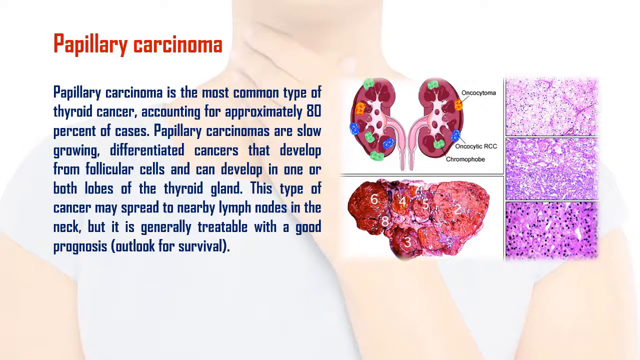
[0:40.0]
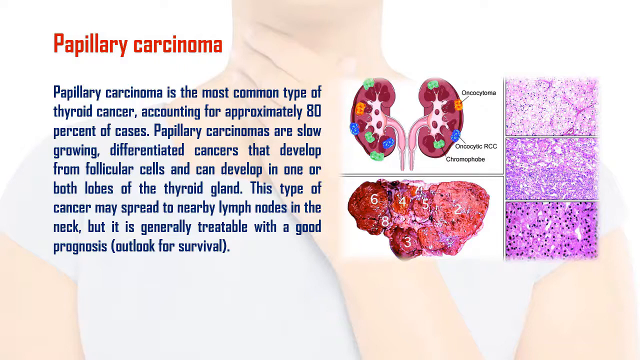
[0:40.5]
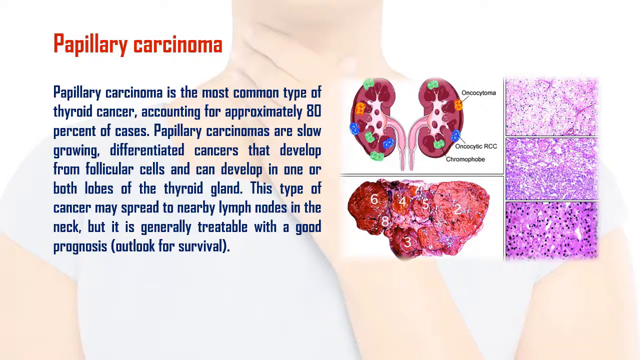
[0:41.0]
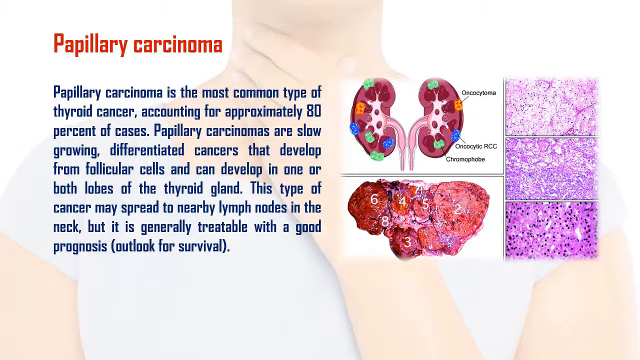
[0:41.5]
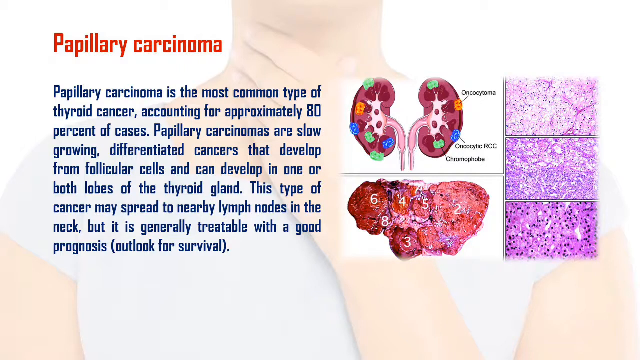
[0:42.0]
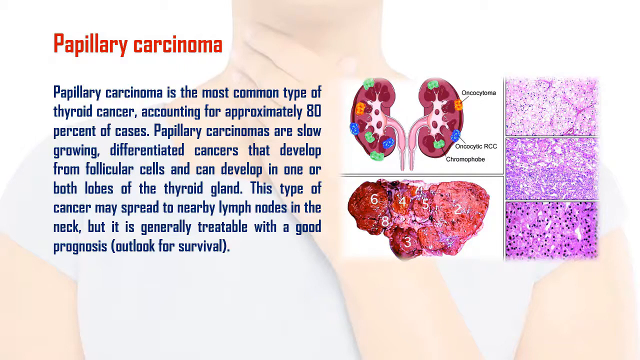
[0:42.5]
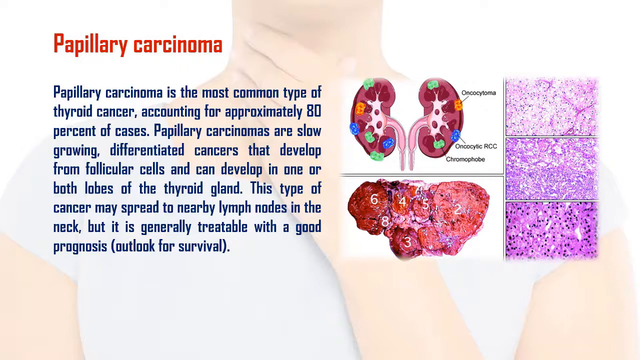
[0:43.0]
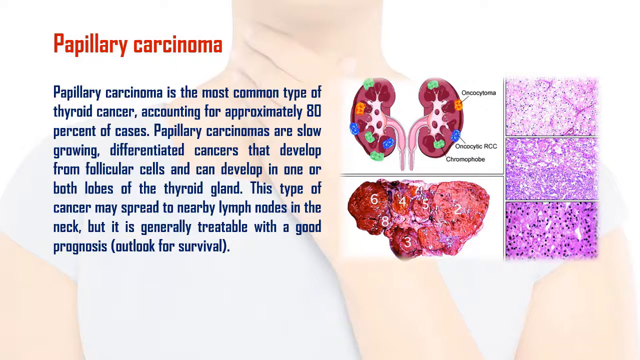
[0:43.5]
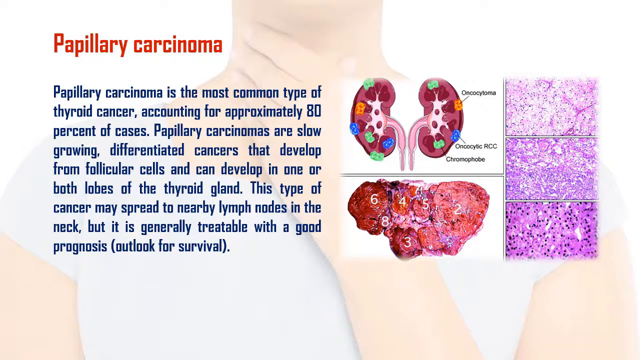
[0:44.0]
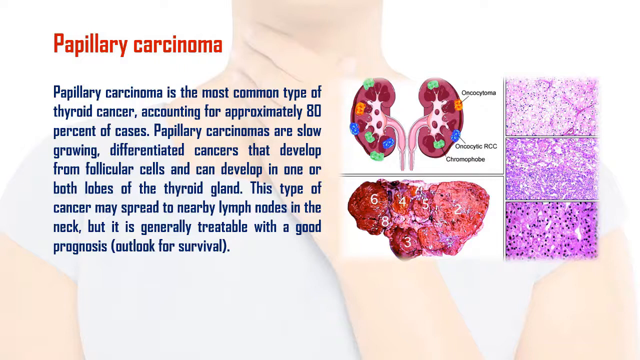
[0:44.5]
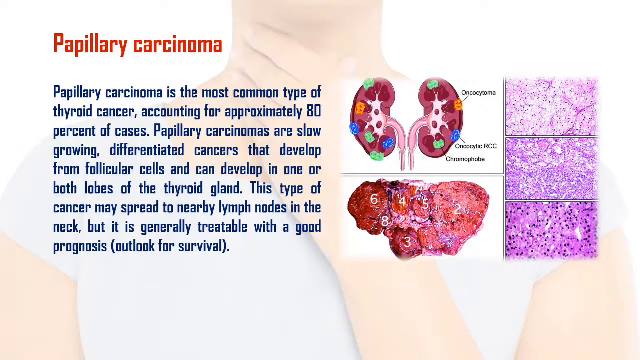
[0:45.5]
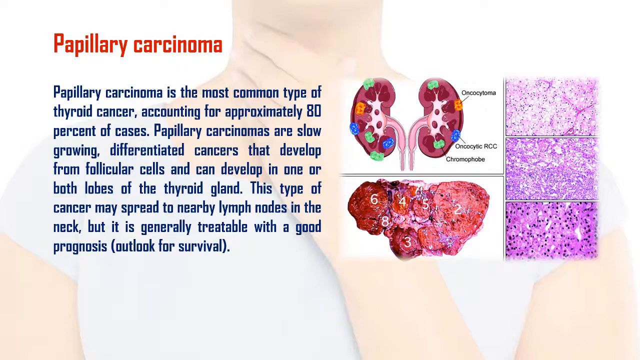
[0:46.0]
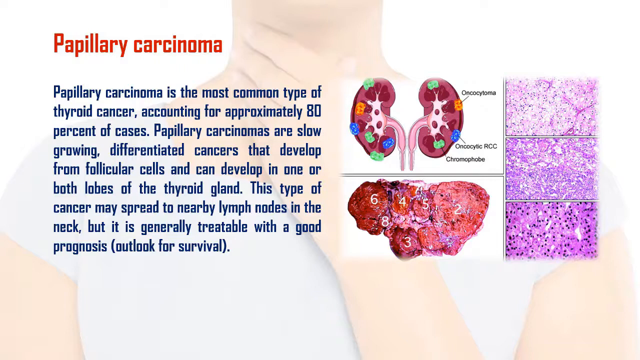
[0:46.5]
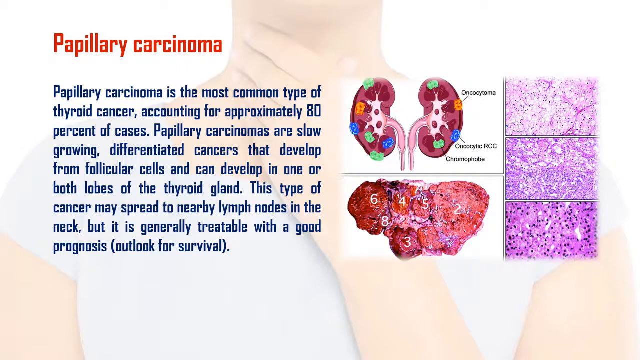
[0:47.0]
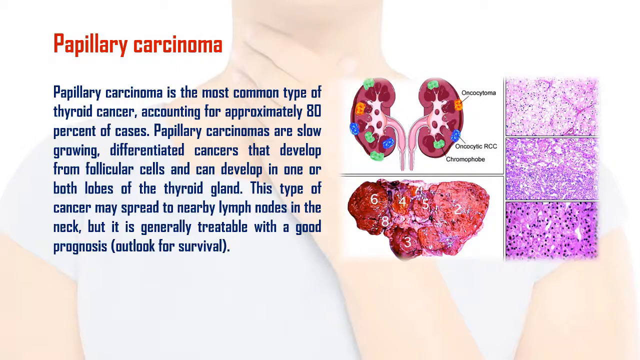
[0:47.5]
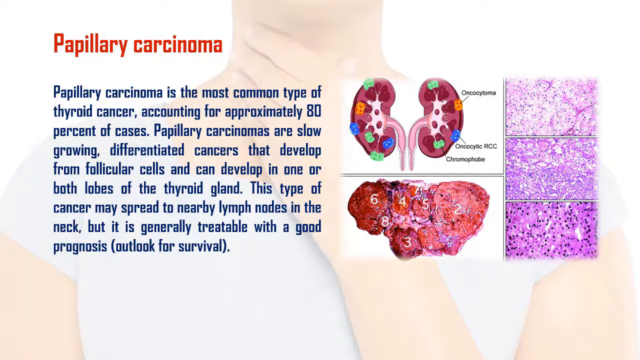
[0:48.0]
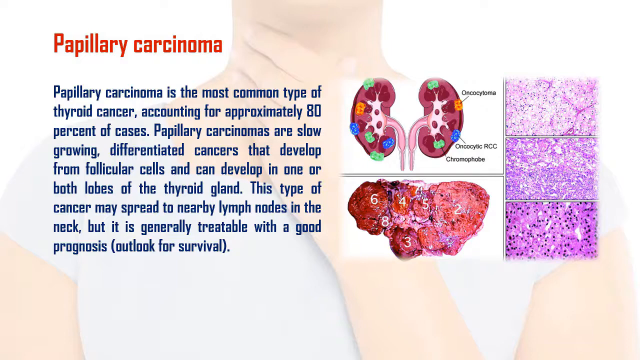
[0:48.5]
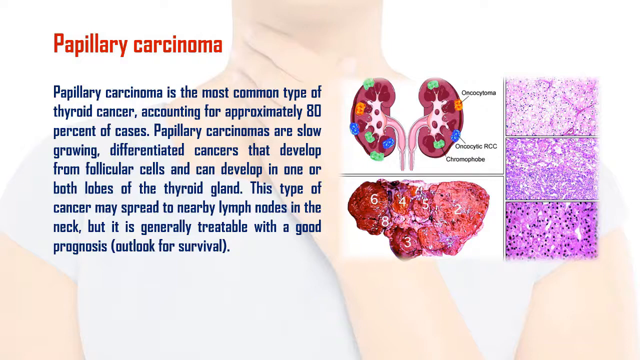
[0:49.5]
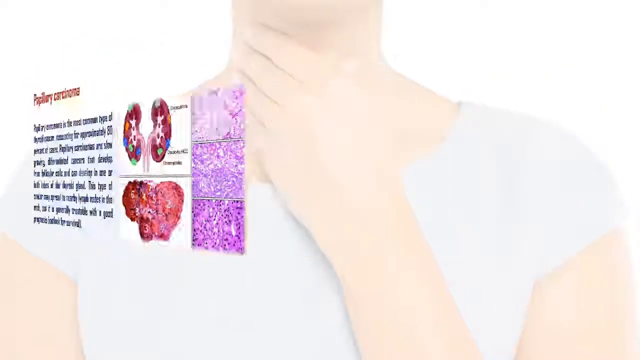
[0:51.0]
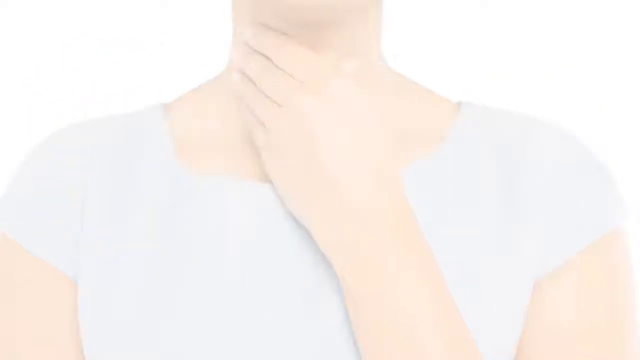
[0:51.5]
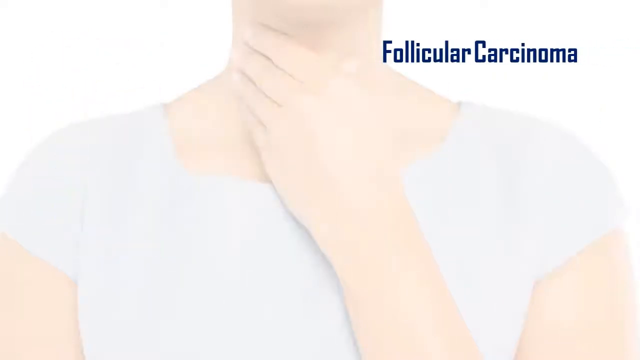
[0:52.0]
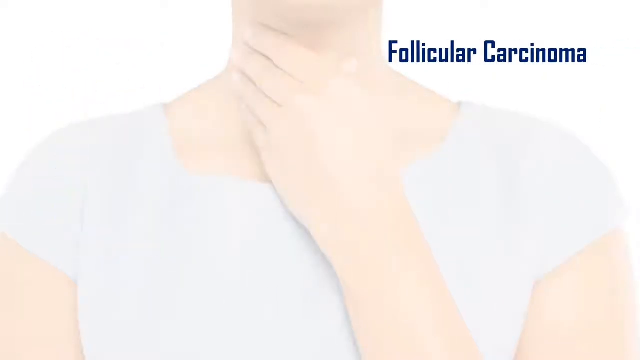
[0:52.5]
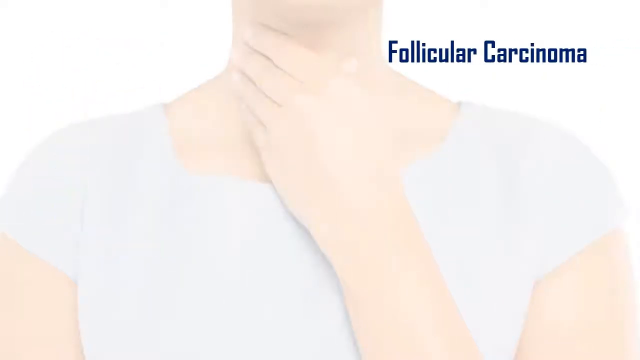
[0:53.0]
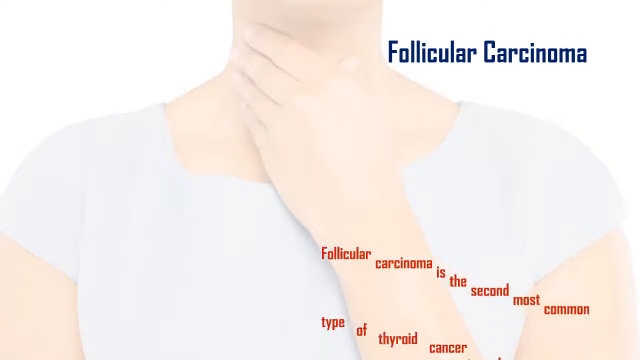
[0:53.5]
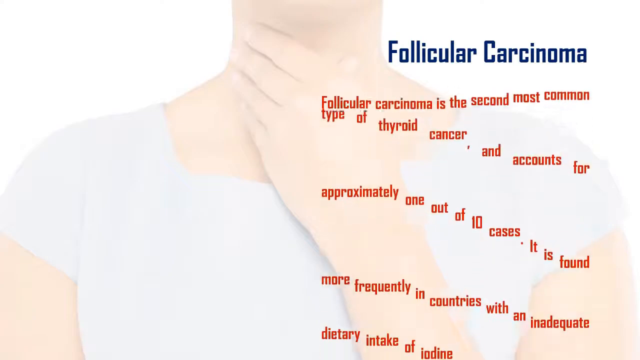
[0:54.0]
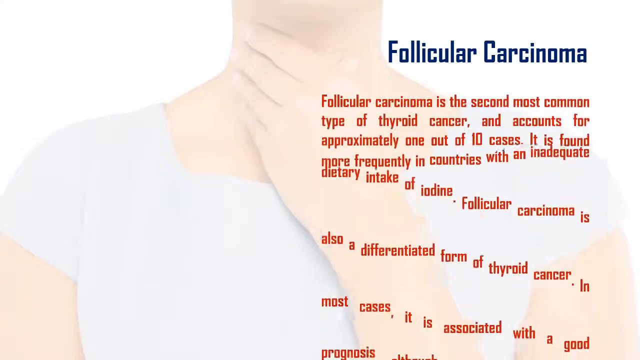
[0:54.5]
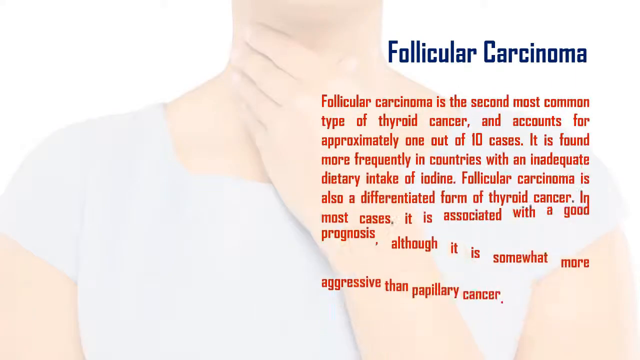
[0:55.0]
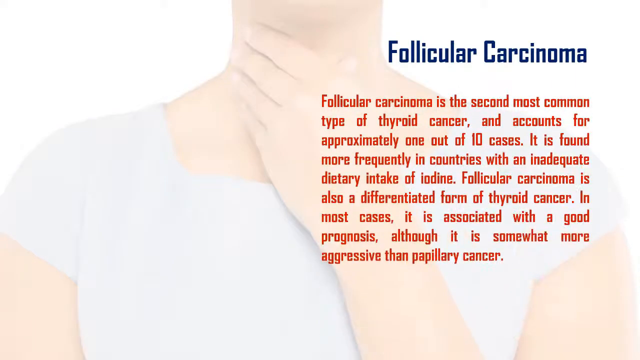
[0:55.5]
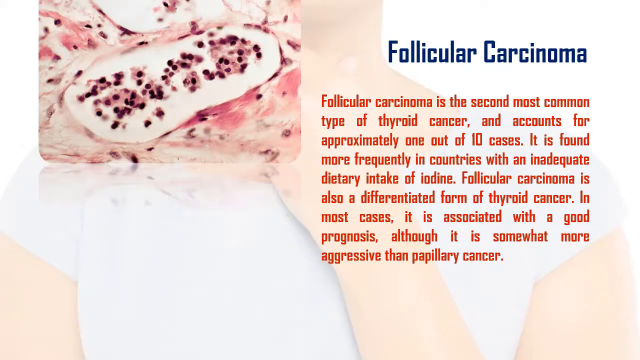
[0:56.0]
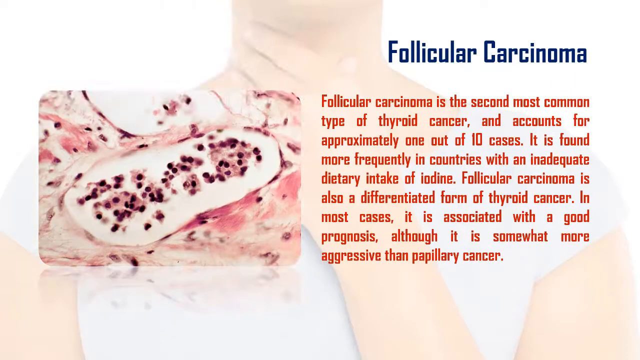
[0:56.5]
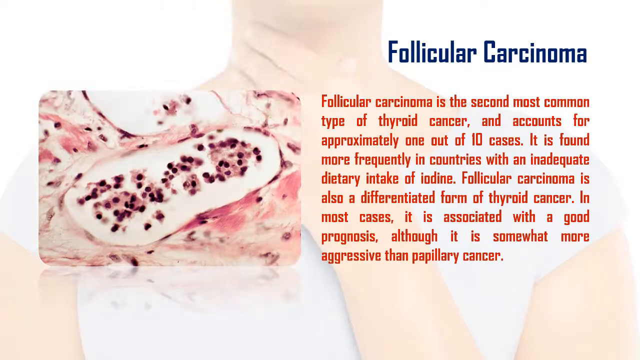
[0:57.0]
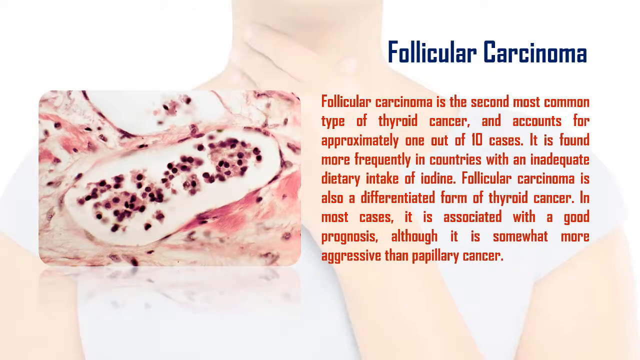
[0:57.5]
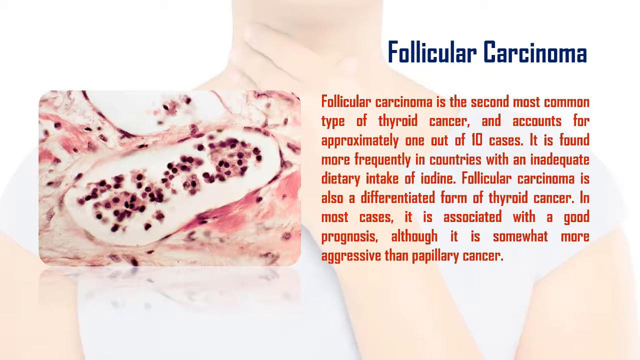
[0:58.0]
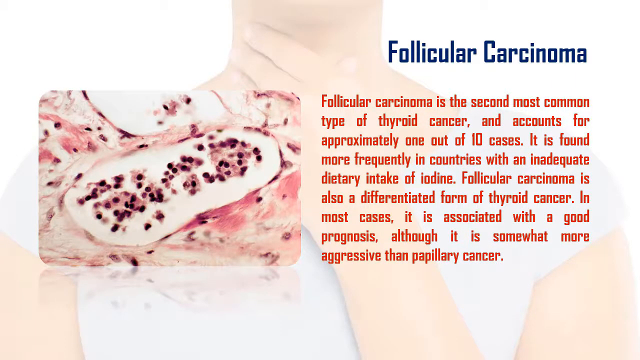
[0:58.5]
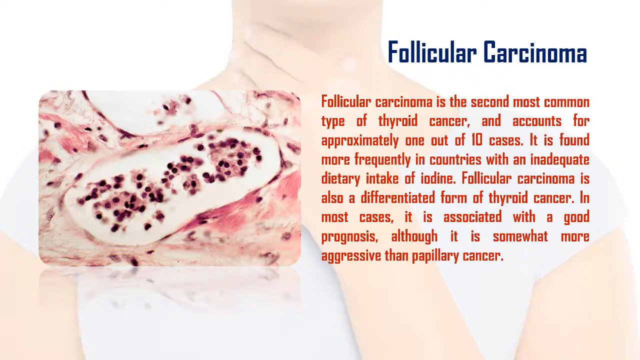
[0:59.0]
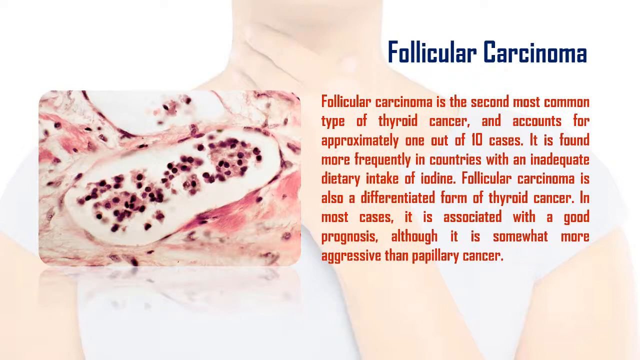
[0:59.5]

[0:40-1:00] A stationary illustrated or digitally enhanced image shows a woman from the chest up to the top of her chin, holding her left arm up and wrapped around her thyroid area or throat, against a solid white background. Red text in the upper left corner reads "papillary carcinoma." Below it, text reads "papillary carcinoma is the most common type of thyroid cancer, accounting for approximately 80% of cases. Papillary carcinomas are slow-growing, differentiated cancers that develop from follicular cells and can develop in one or both lobes of the thyroid gland. This type of cancer may spread to nearby lymph nodes in the neck, but it is generally treatable with a good prognosis." Images on the right show an illustration of the thyroid as well as what looks like a real close-up view of one.